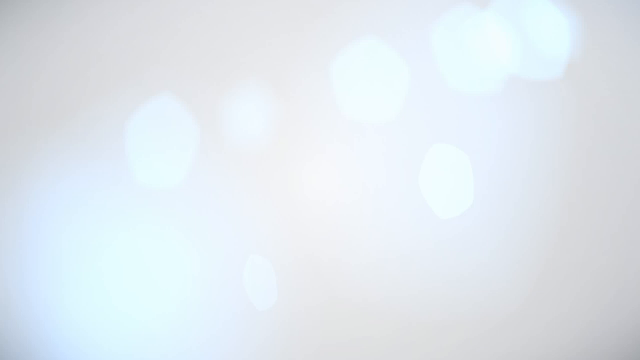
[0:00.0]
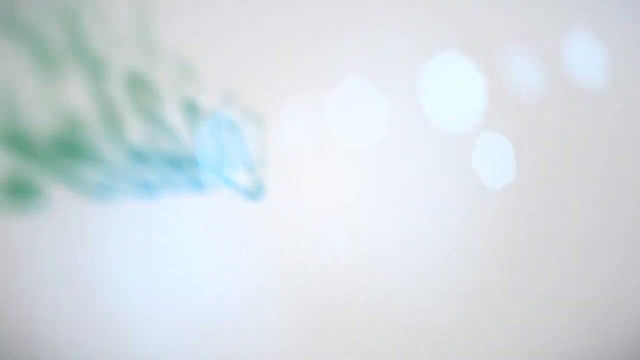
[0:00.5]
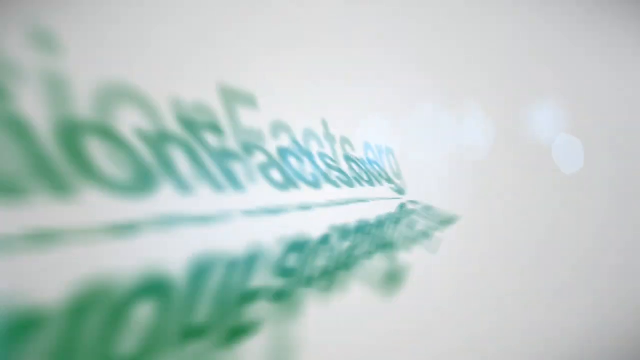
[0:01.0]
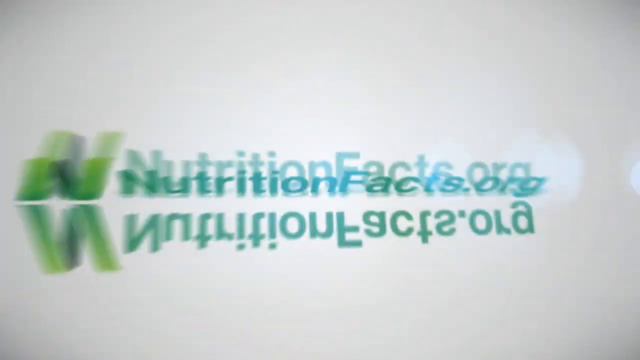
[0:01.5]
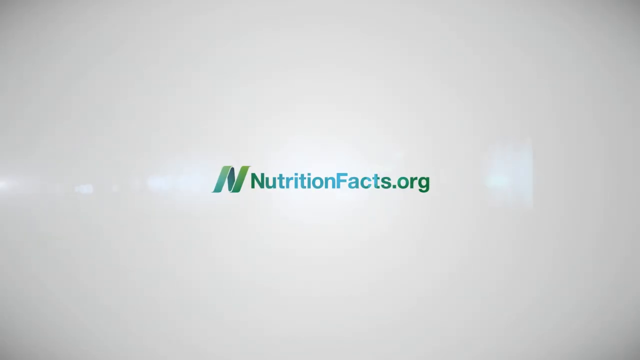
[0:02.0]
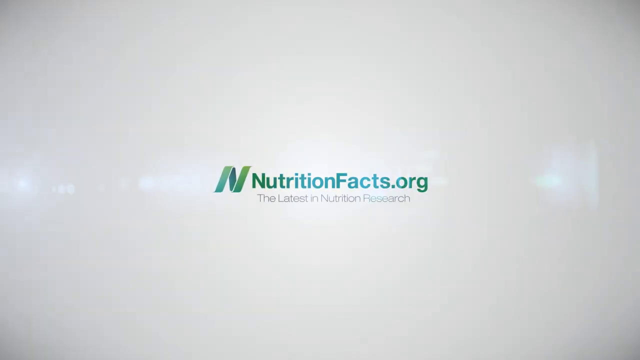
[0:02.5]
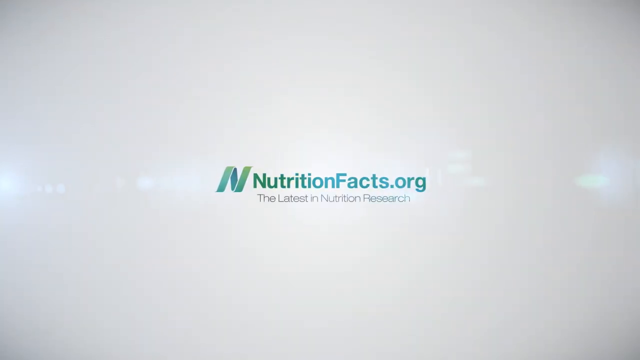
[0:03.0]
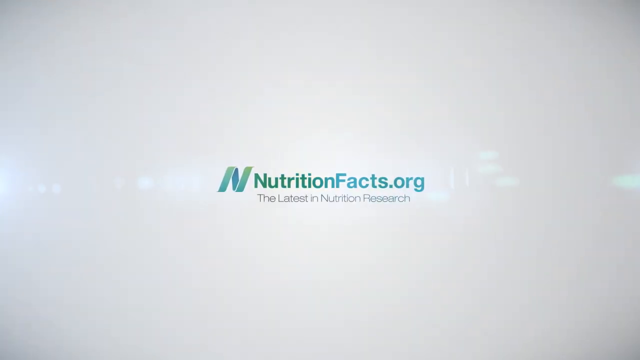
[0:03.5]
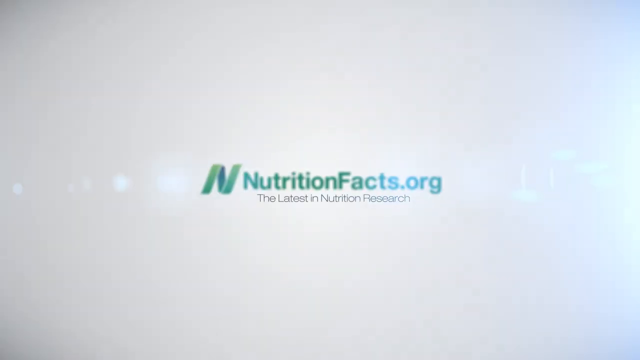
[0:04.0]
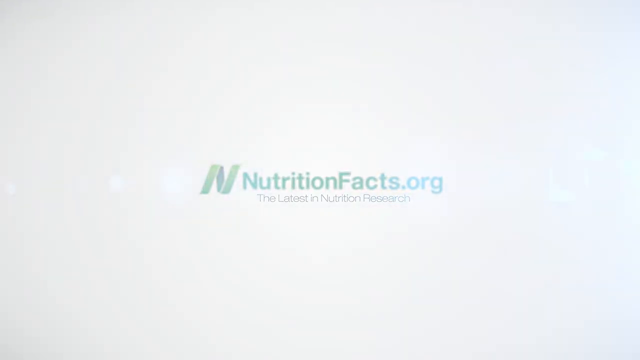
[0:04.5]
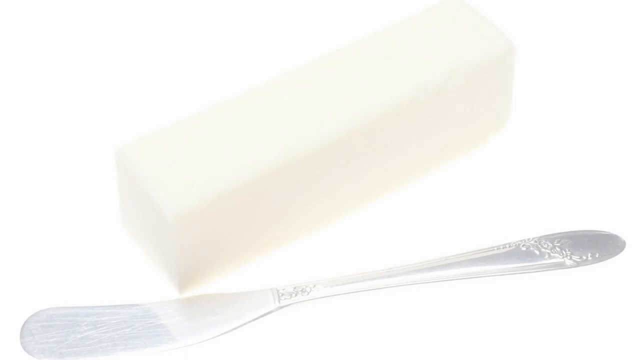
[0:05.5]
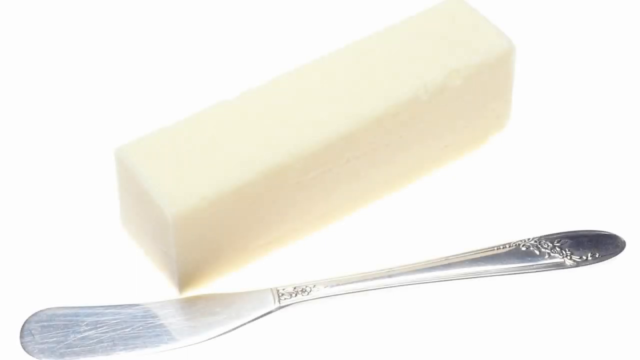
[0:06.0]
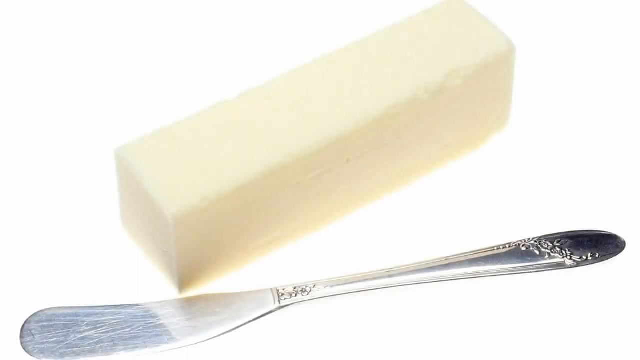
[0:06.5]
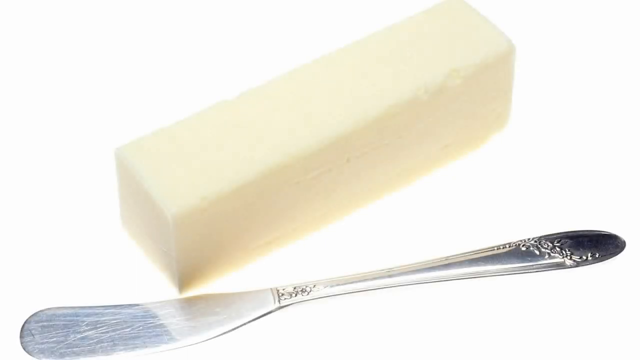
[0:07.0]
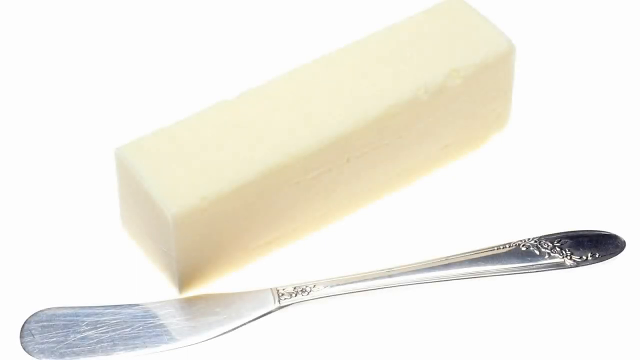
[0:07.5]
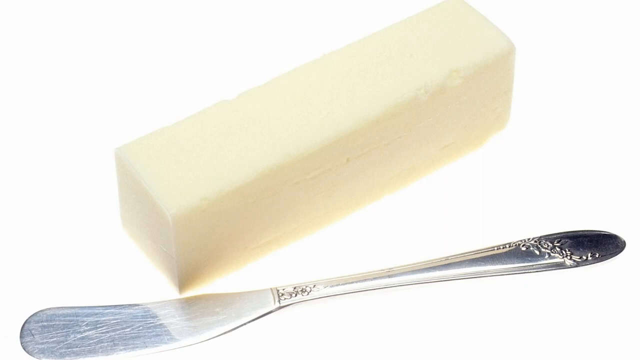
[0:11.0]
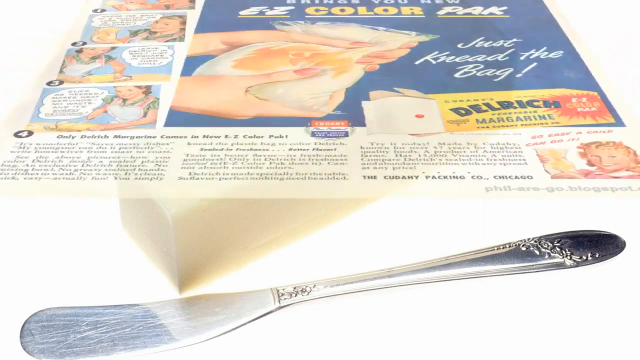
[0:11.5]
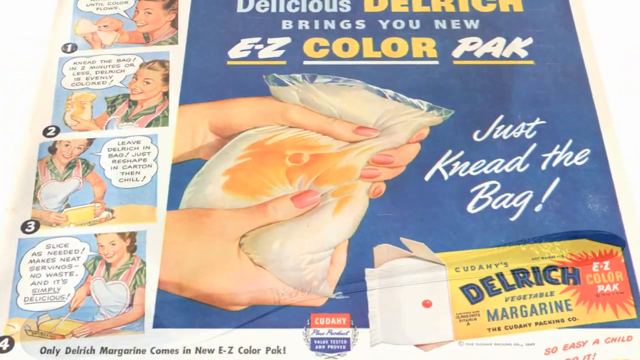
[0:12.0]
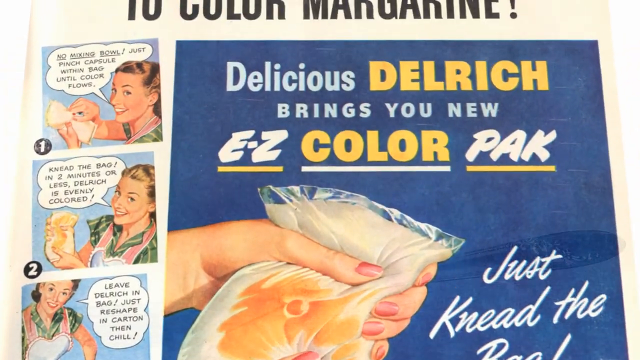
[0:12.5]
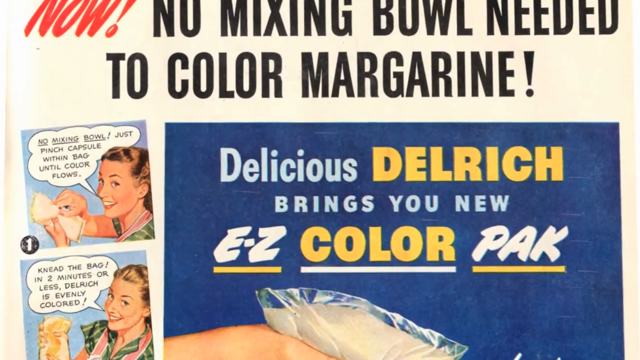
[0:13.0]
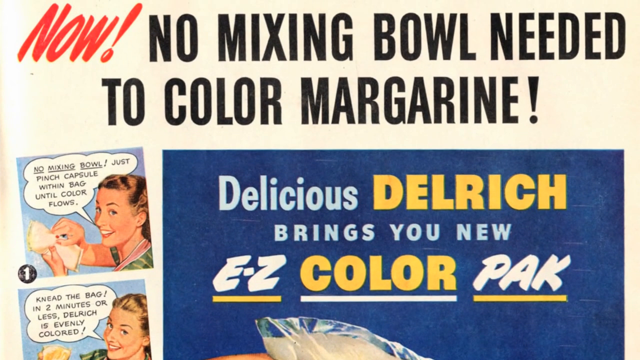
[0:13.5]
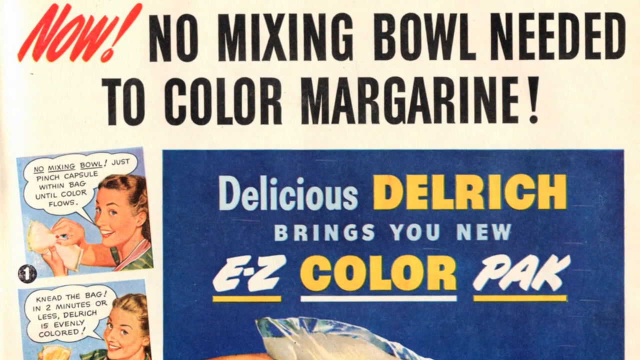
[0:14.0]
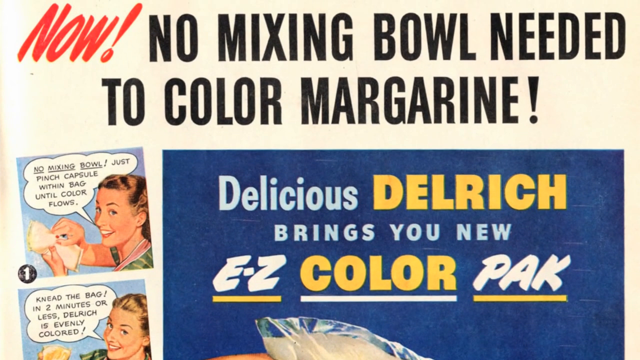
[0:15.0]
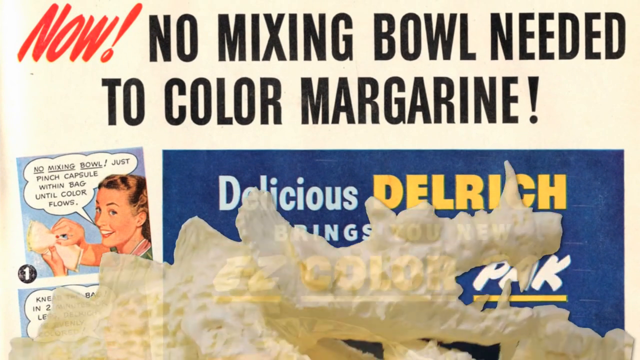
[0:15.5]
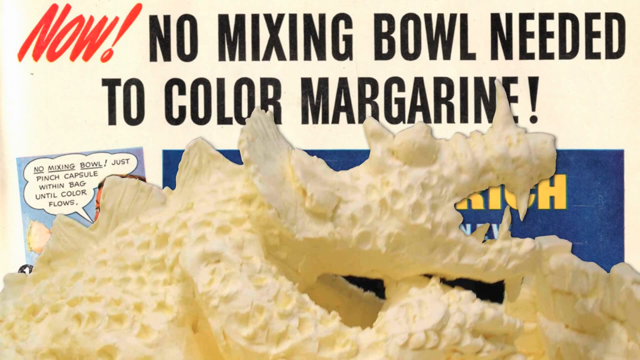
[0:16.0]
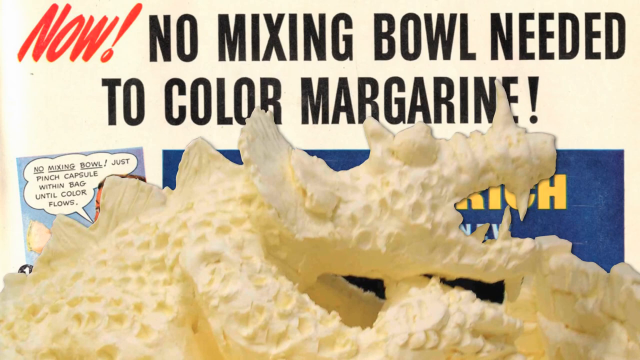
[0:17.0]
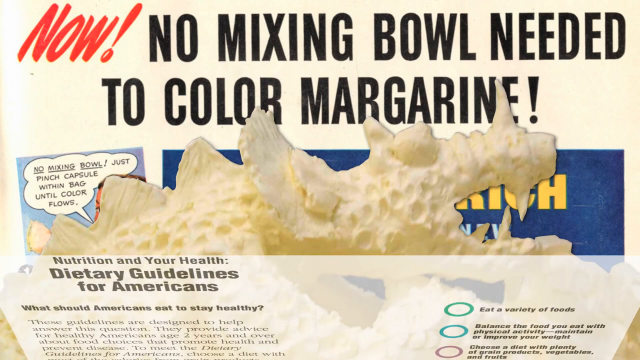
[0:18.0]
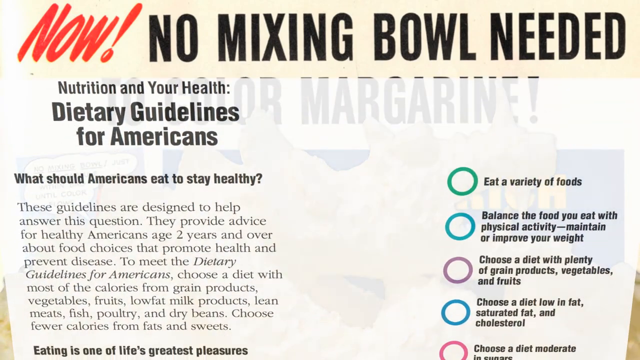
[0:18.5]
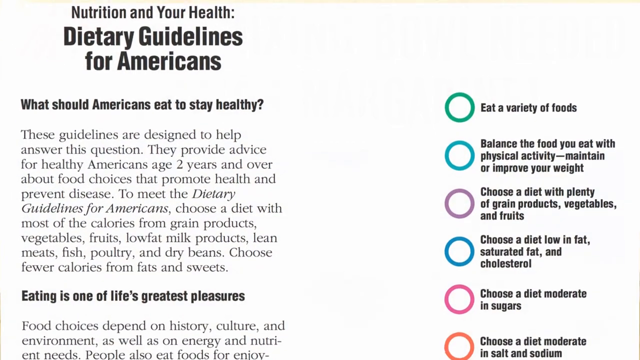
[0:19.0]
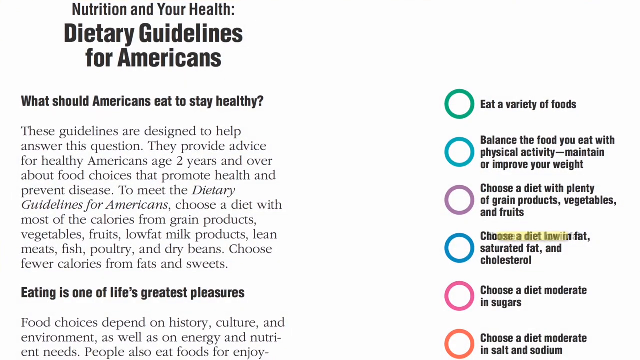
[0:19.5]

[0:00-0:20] The main subject appears to be margarine meant to make baking easier. The video opens on a blank screen with a nutrition info logo. Next comes a picture of a regular stick of margarine or butter with a butter knife. The third screen is an advertisement for a special baking margarine, a softer liquid one in a bag, shown as a drawn picture of a girl holding it while she bakes, in a comic style that looks like something from the 1950s, with text about the special margarine for baking. Finally there is a quick shot of dietary guidelines.